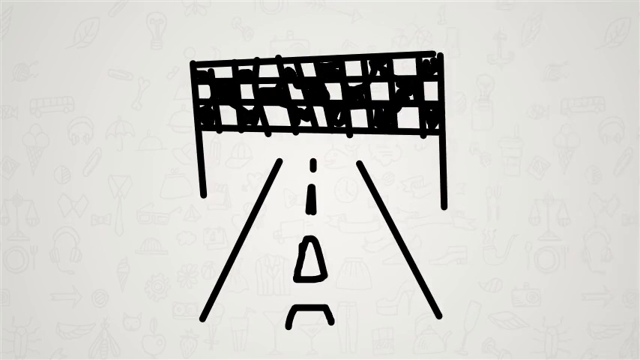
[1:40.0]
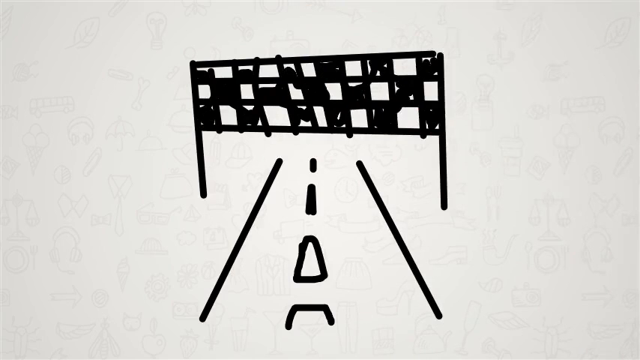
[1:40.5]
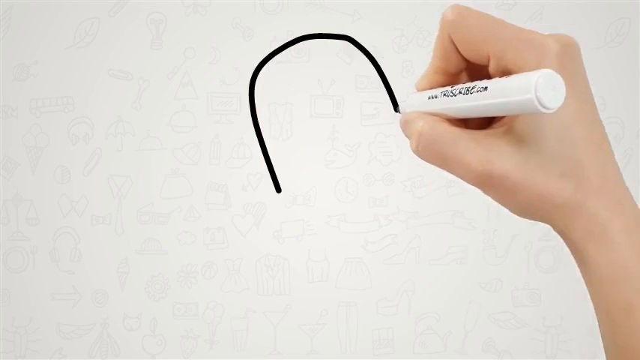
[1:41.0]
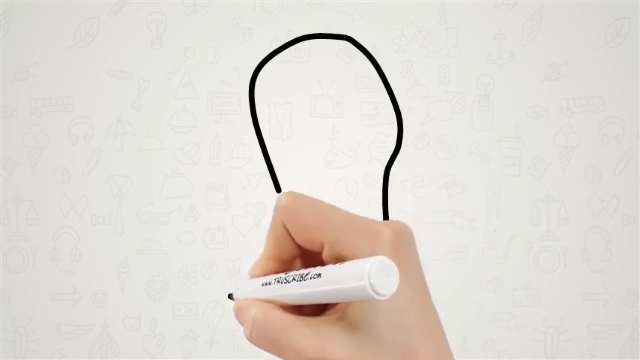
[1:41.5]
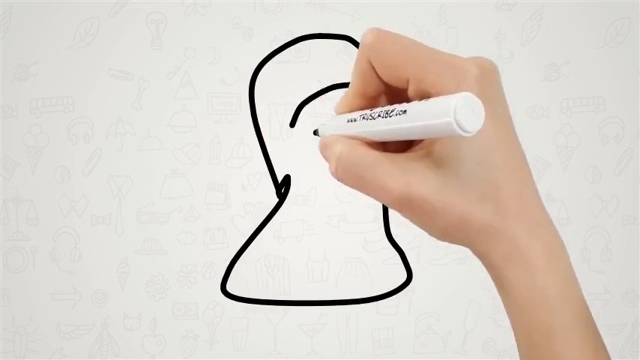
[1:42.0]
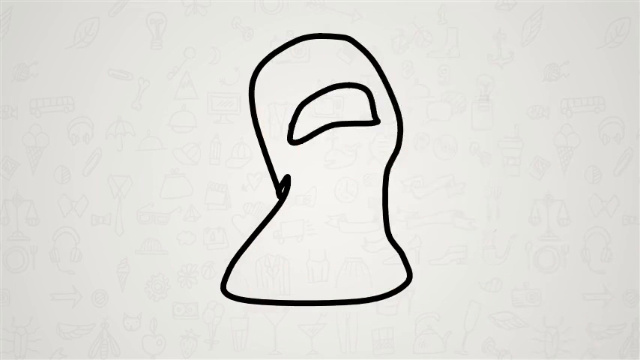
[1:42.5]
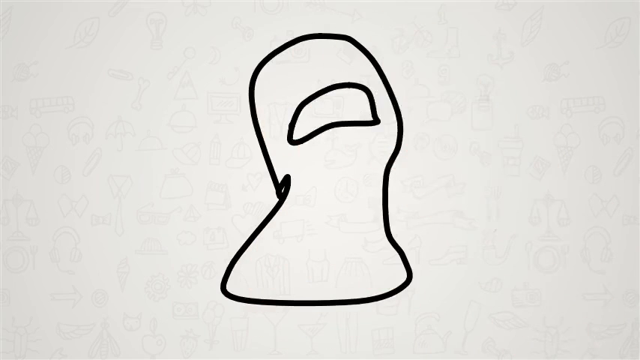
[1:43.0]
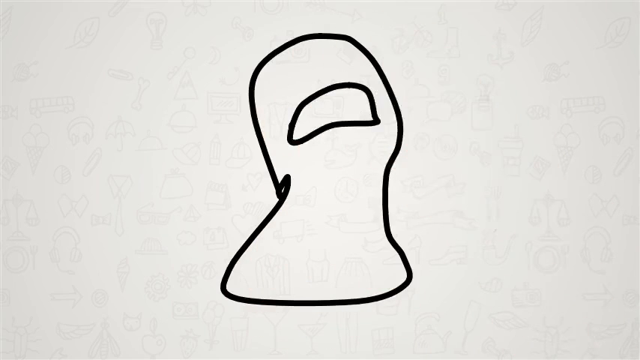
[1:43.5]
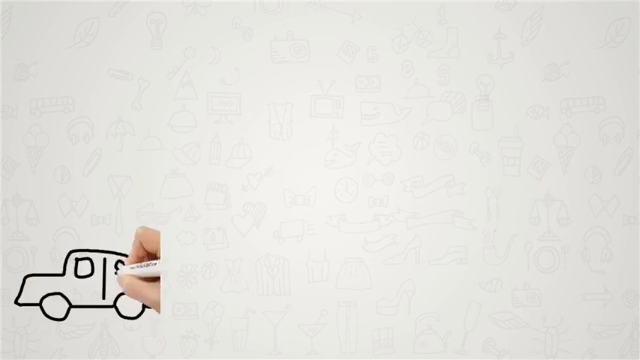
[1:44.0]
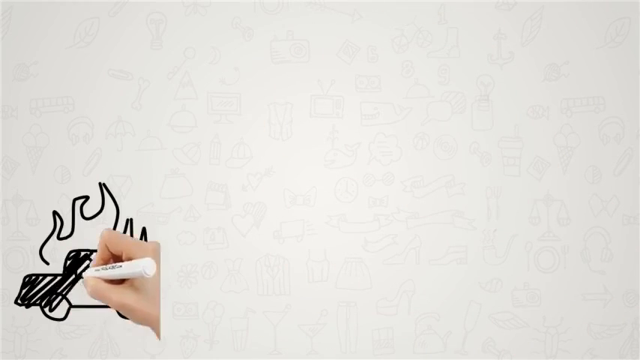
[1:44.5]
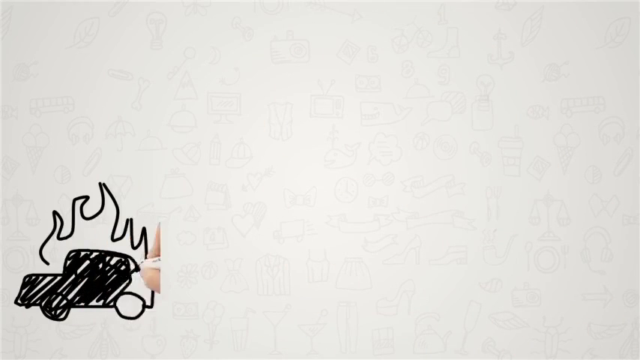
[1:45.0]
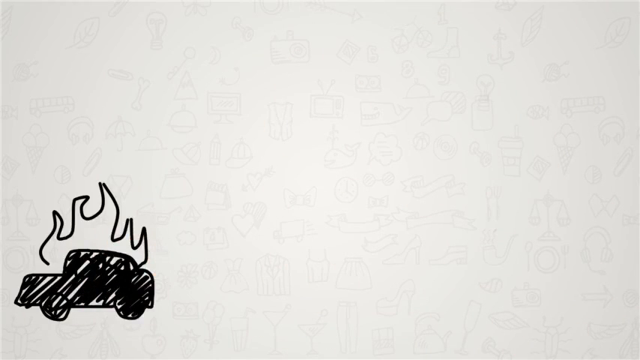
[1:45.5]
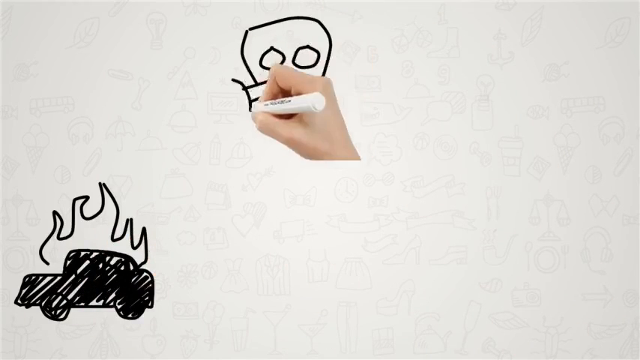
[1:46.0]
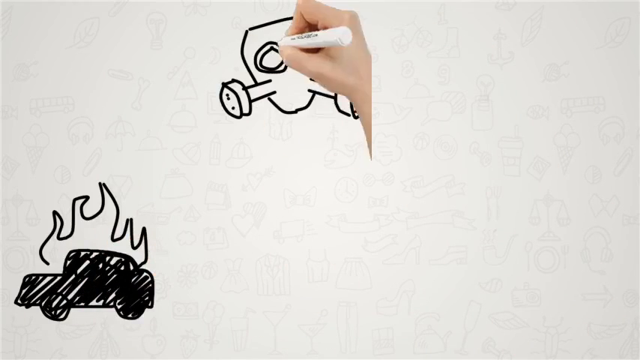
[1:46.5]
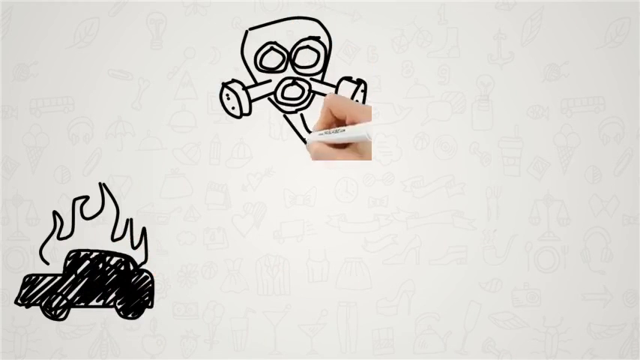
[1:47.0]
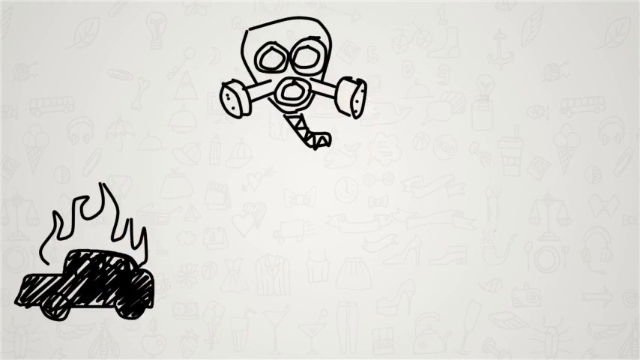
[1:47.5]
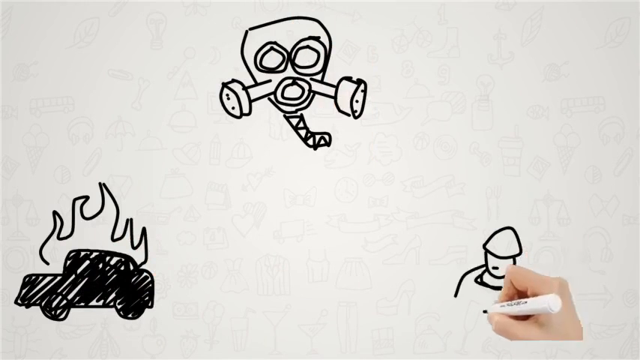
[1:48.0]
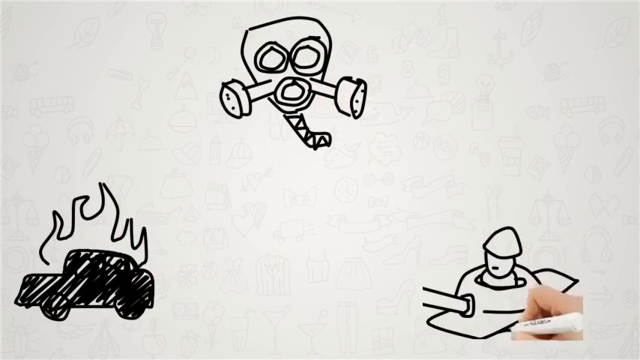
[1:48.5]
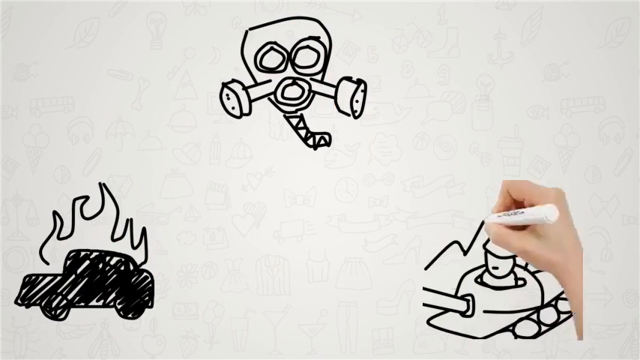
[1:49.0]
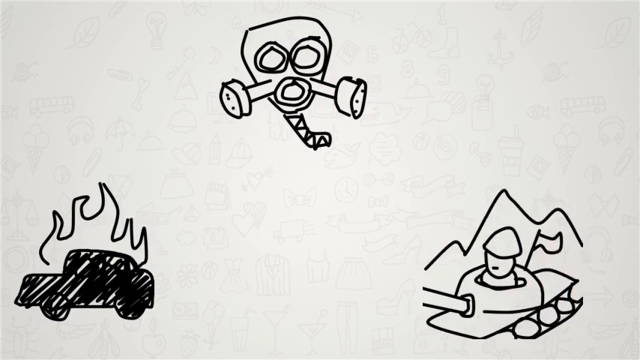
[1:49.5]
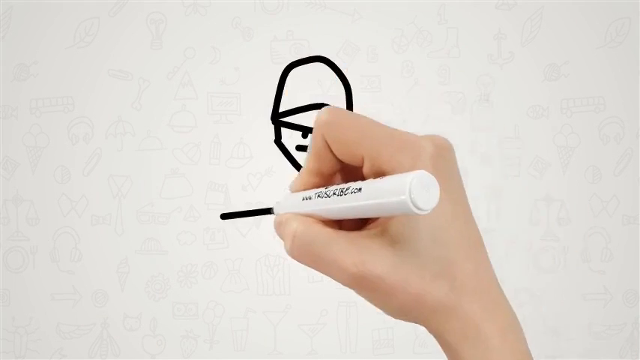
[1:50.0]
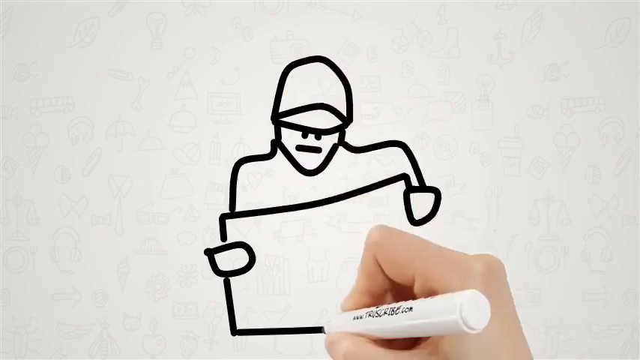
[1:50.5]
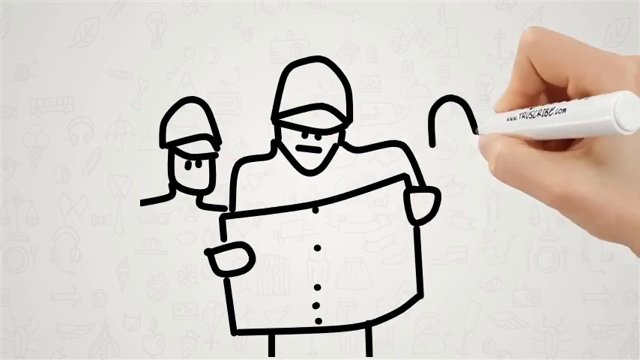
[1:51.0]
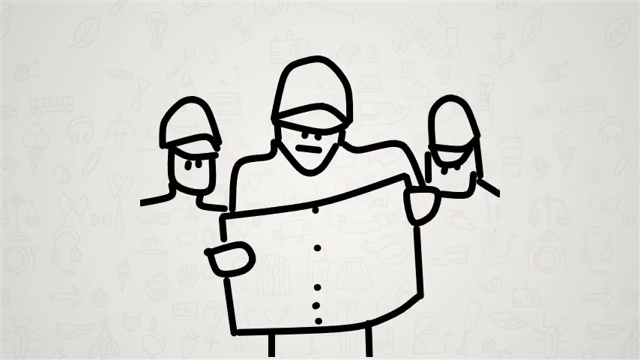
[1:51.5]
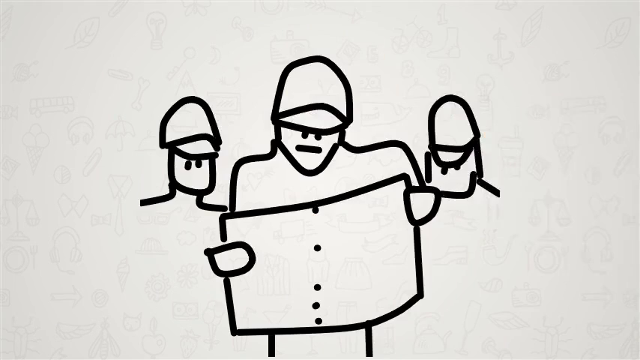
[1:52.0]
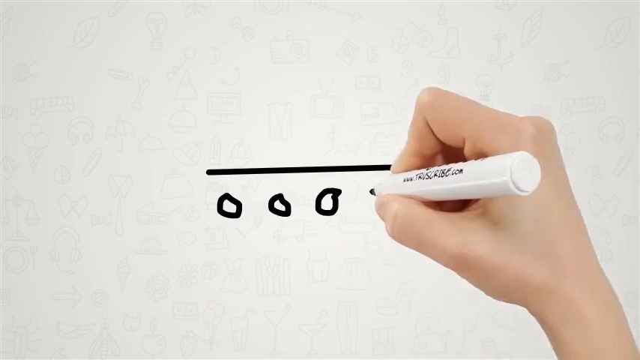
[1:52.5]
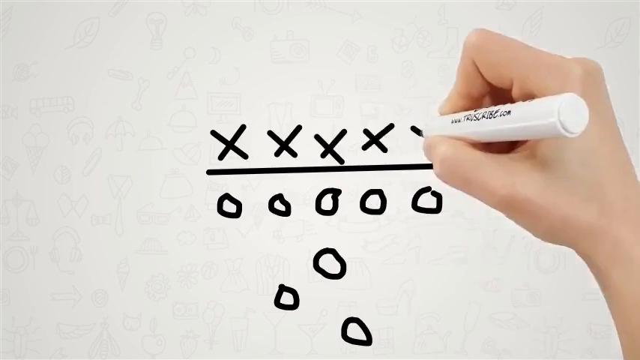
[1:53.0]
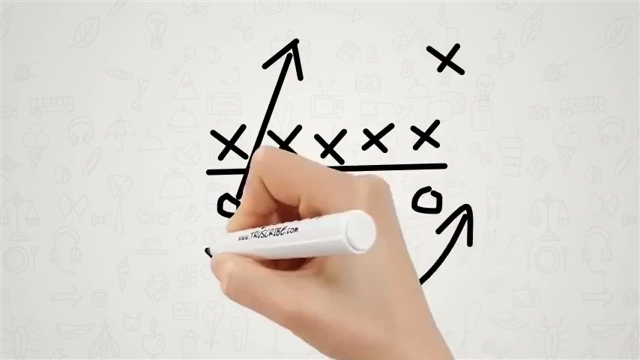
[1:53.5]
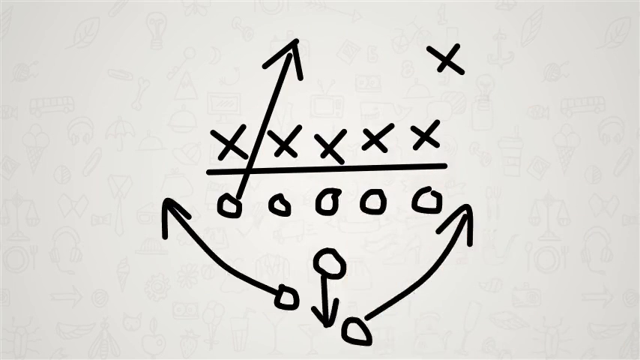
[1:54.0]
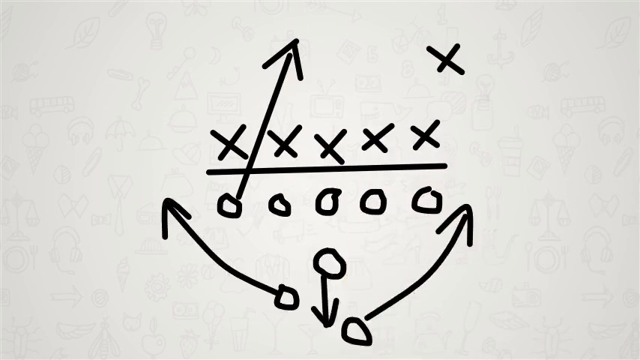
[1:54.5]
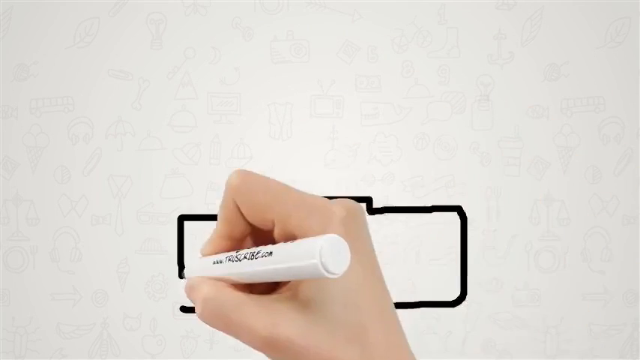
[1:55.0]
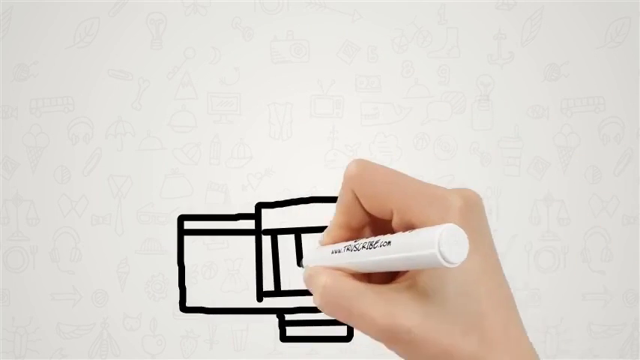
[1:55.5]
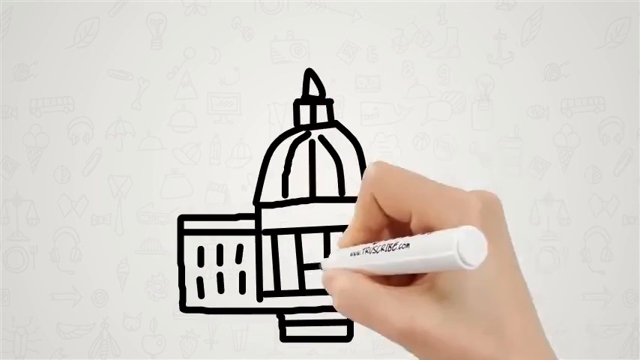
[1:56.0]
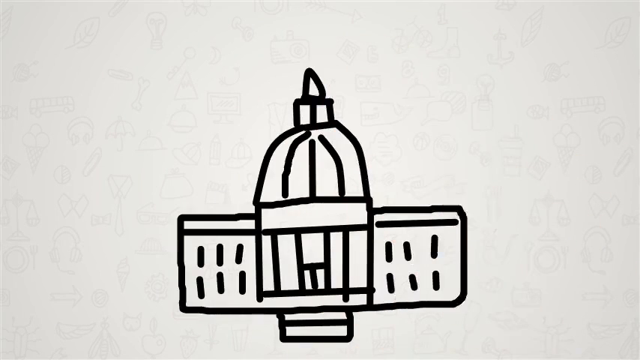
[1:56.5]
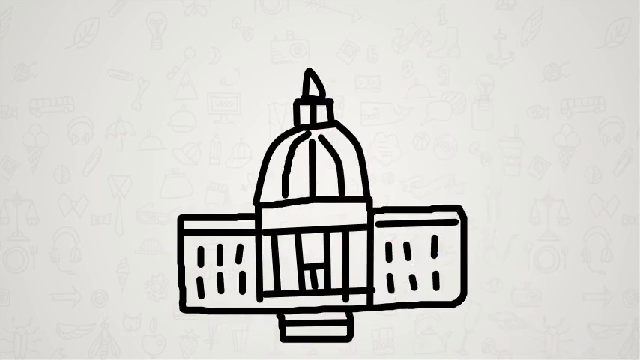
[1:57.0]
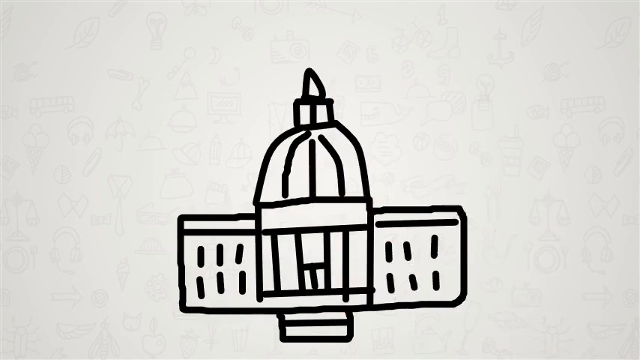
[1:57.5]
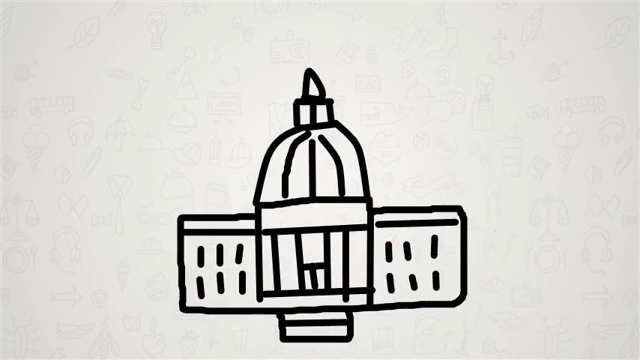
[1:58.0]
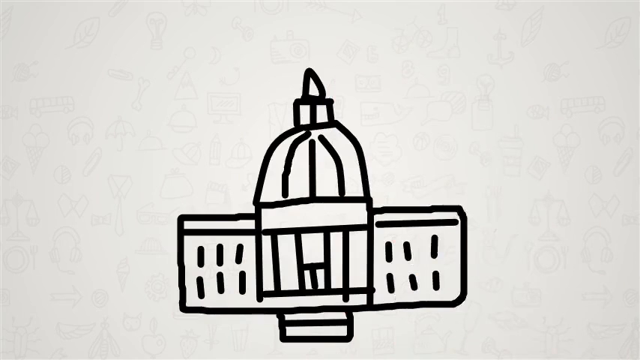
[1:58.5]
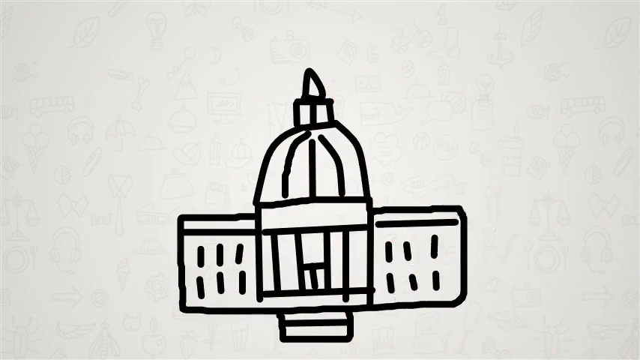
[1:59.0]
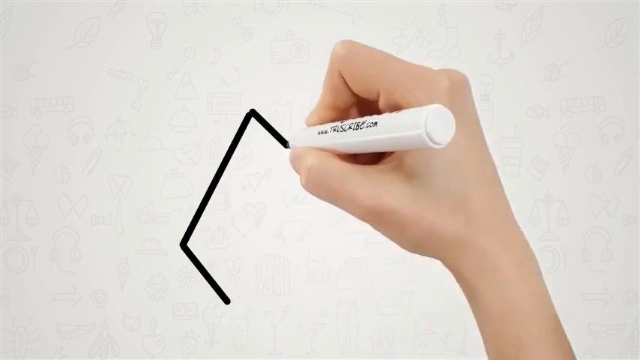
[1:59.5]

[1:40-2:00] On a white background, a white hand and part of the arm hold a white pen with black writing on it, drawing pictures in black marker ink; after each drawing is finished, it disappears and the next one is drawn. The first drawing is a road with road markings, with a flag in a checkerboard pattern going over the top of it, covering the entire road; it looks like a finishing line with a black and white checkerboard finishing flag. Next is a drawing of what looks like a sort of neck and head with what looks like a visor on it. Then a small drawing in the bottom left-hand corner shows a car, shaded in black, in side view with two wheels and what looks like a representation of flames over the top of it. While the car remains in the bottom left-hand corner, what looks like a gas mask is drawn in the centre, with two circular eye shapes, a circular mouth shape and two filters with dots on them either side. Then a tank appears in the bottom right-hand corner, with a man sticking out of it and a mountain behind it. Next is what looks like a drawing of the Capitol building in America, with 12 windows and a dome-shaped roof.